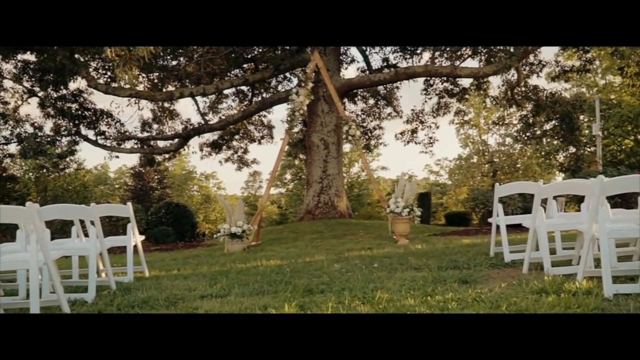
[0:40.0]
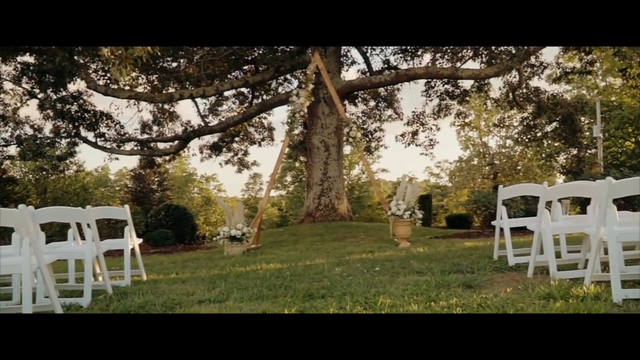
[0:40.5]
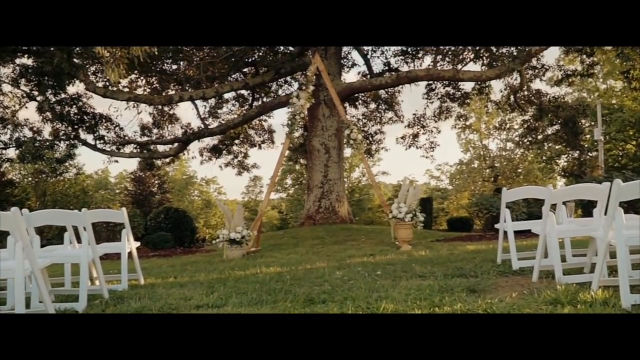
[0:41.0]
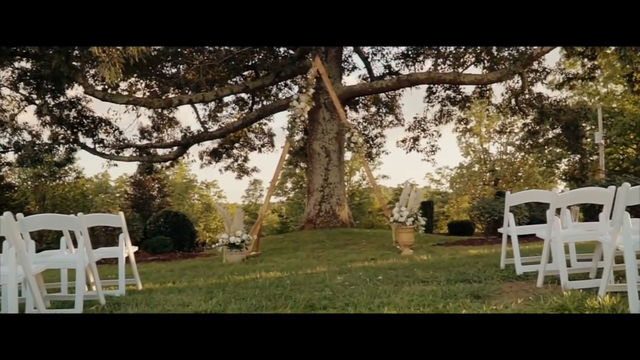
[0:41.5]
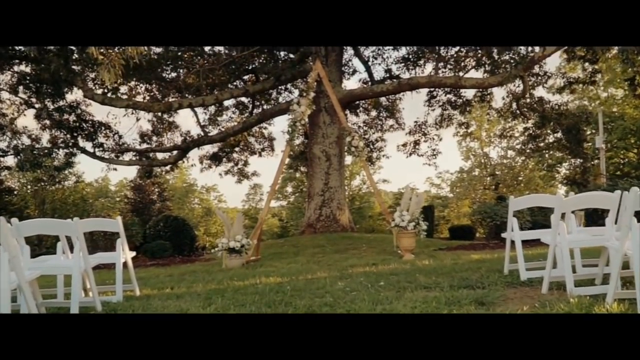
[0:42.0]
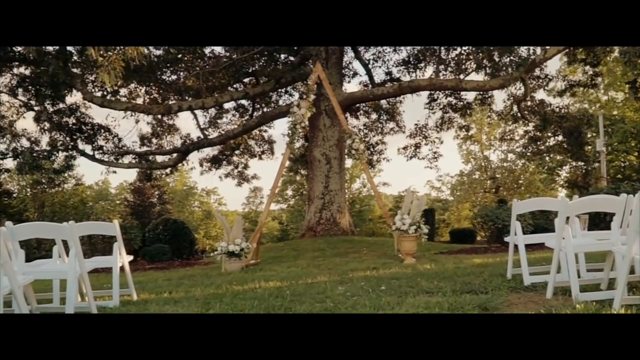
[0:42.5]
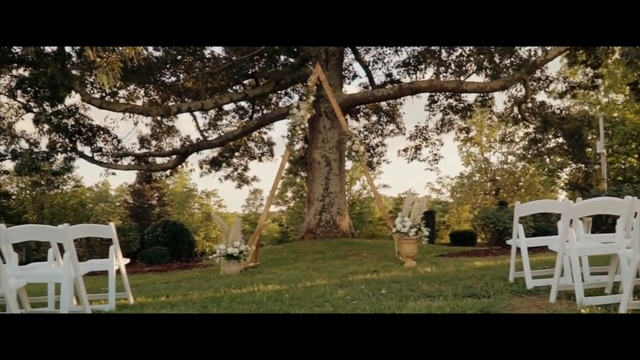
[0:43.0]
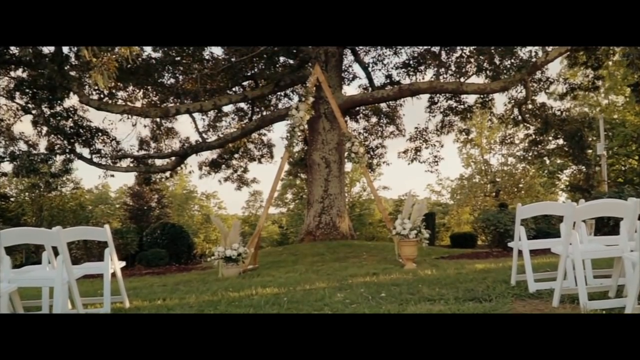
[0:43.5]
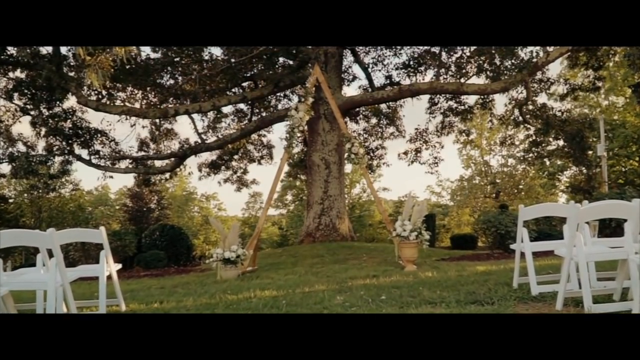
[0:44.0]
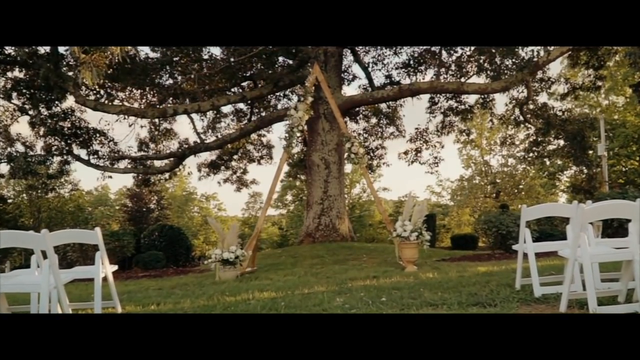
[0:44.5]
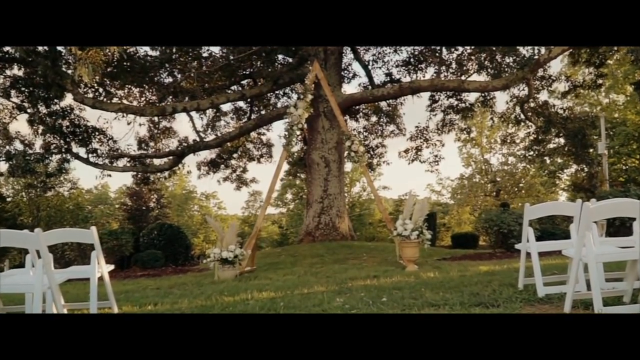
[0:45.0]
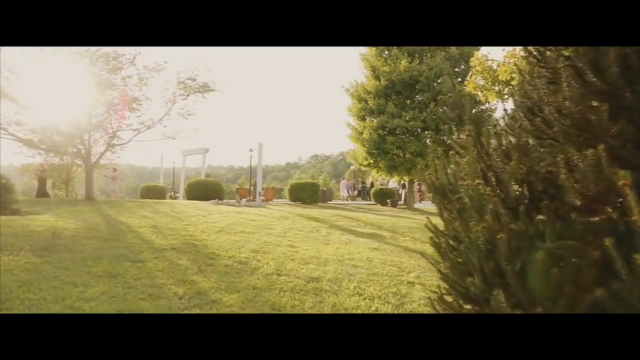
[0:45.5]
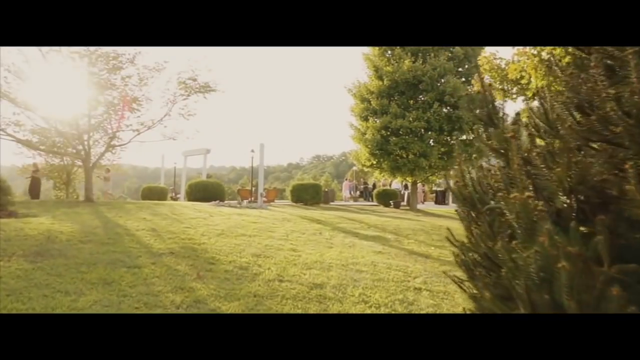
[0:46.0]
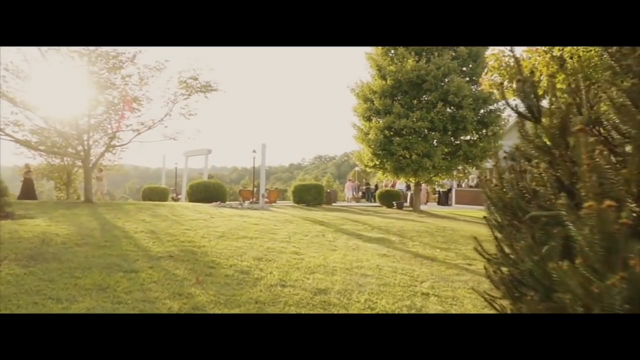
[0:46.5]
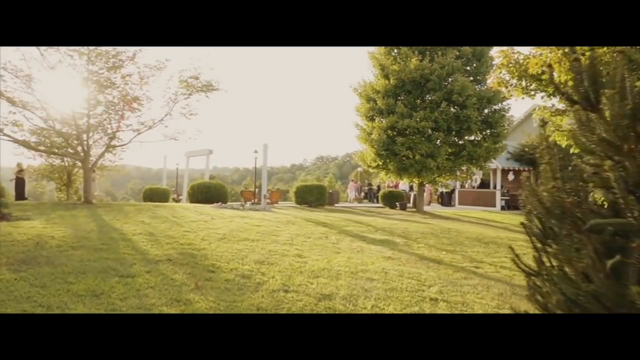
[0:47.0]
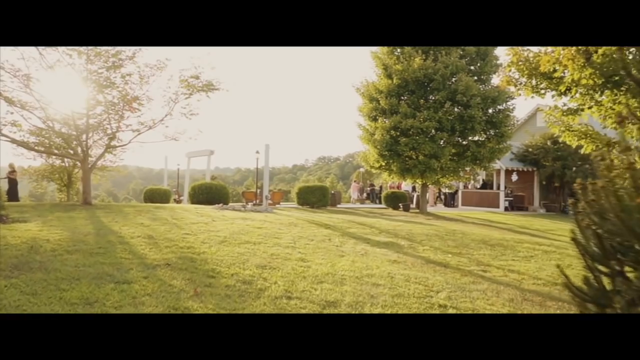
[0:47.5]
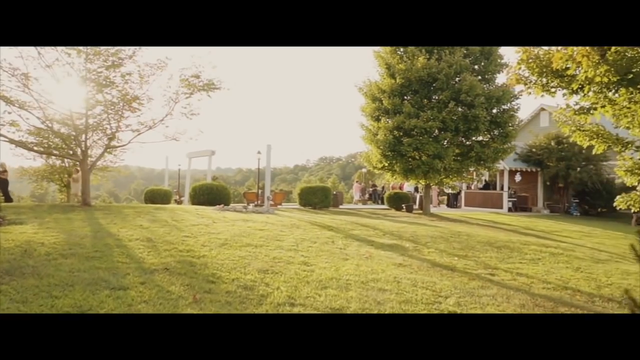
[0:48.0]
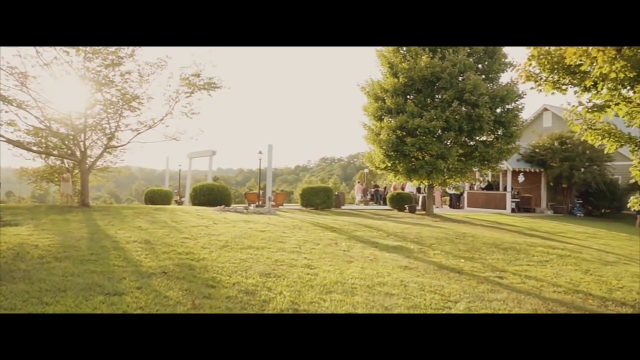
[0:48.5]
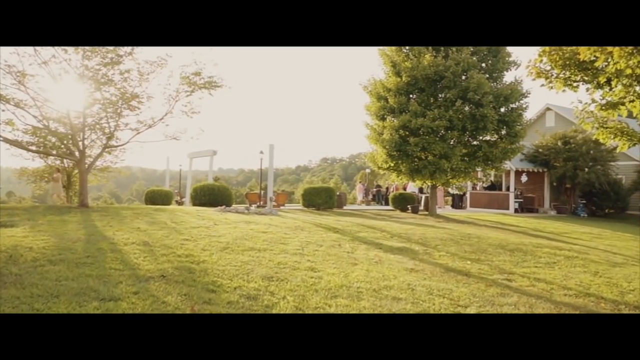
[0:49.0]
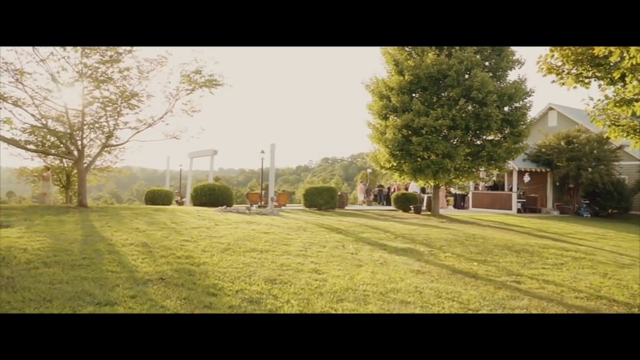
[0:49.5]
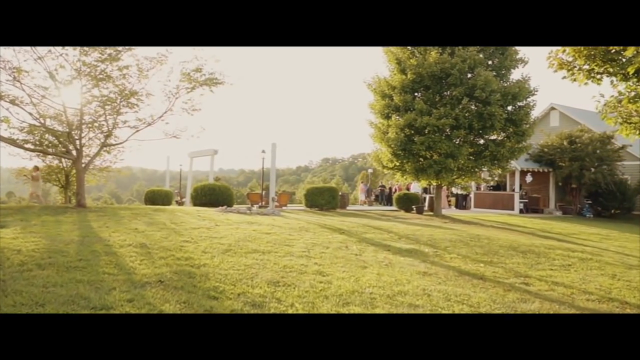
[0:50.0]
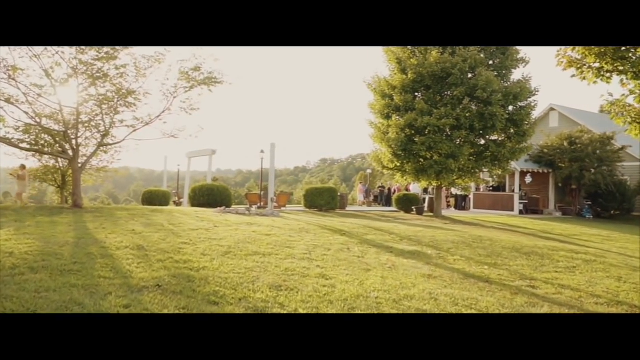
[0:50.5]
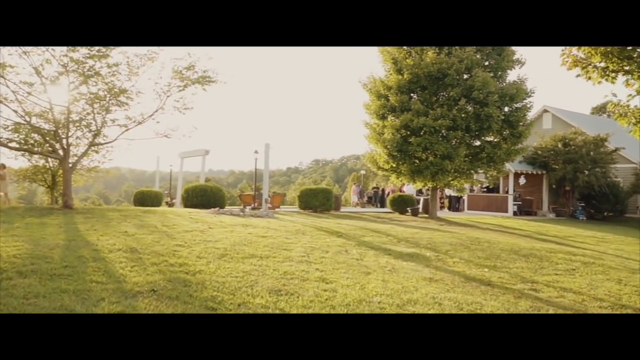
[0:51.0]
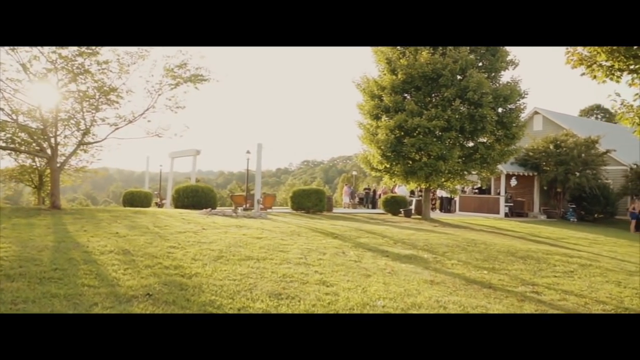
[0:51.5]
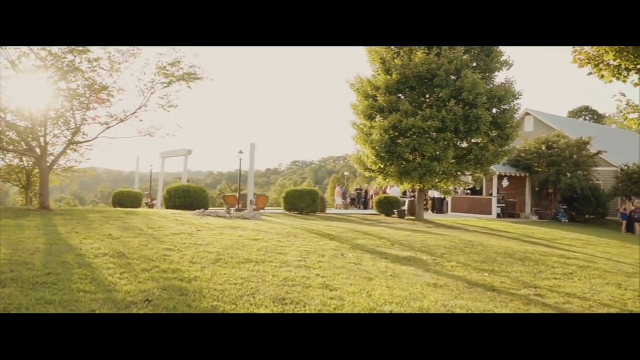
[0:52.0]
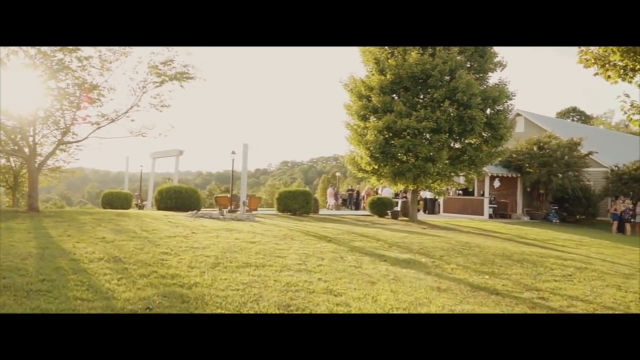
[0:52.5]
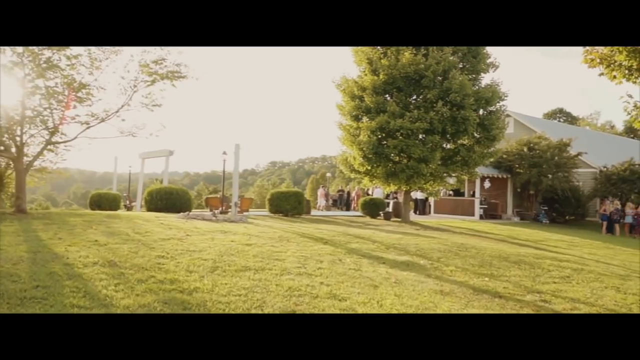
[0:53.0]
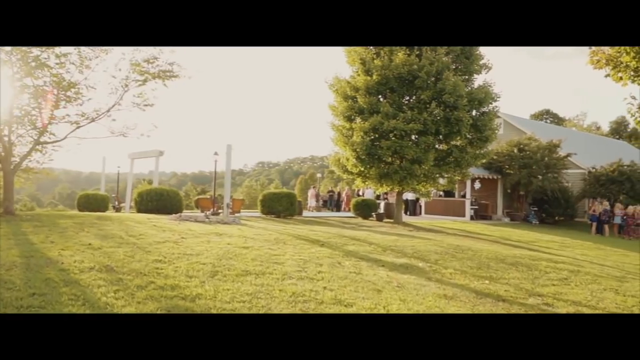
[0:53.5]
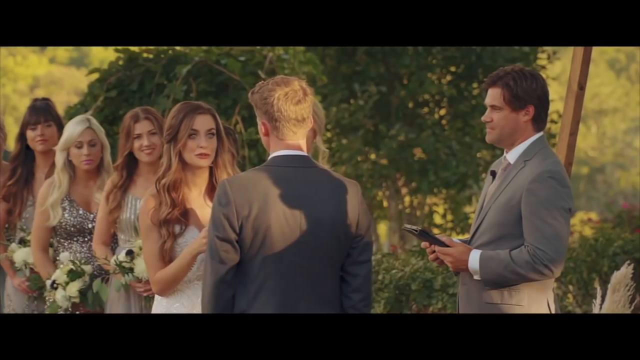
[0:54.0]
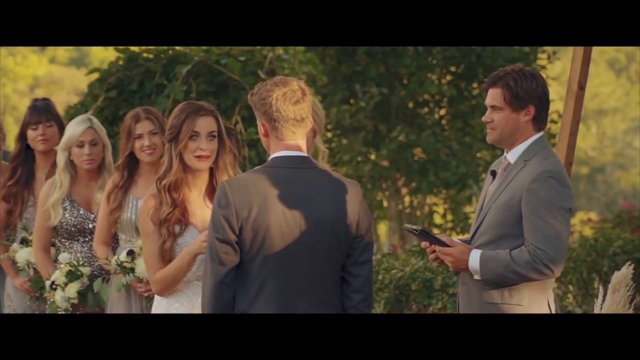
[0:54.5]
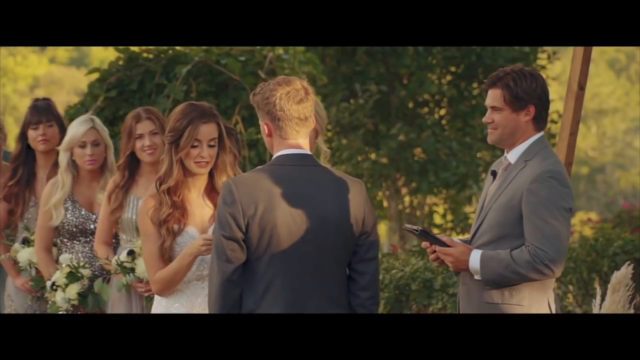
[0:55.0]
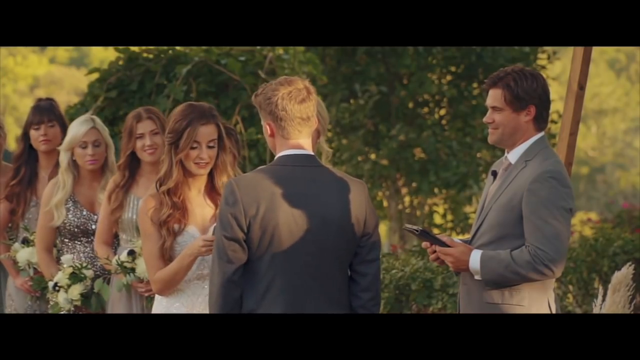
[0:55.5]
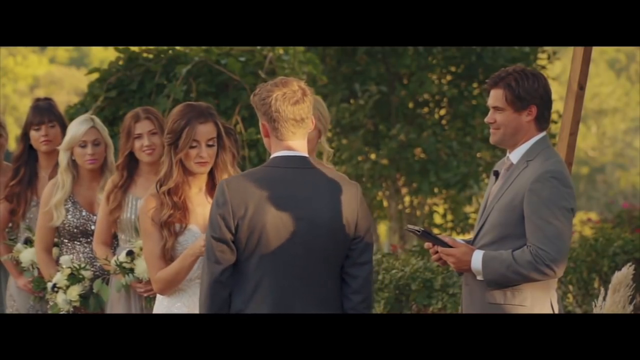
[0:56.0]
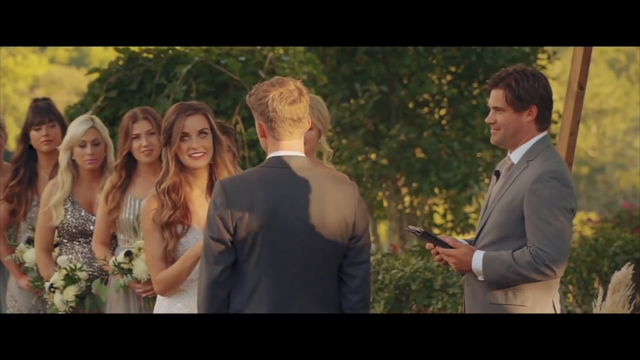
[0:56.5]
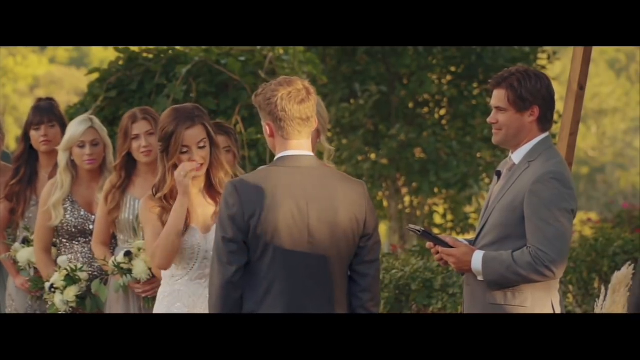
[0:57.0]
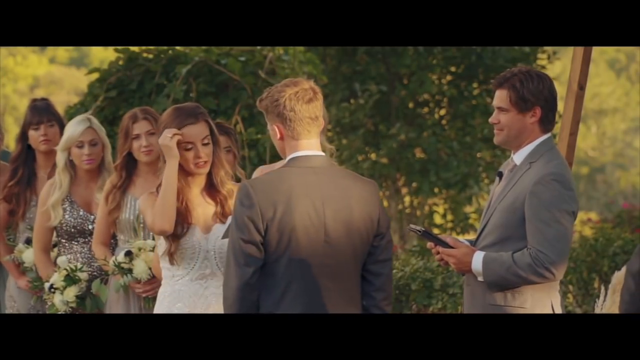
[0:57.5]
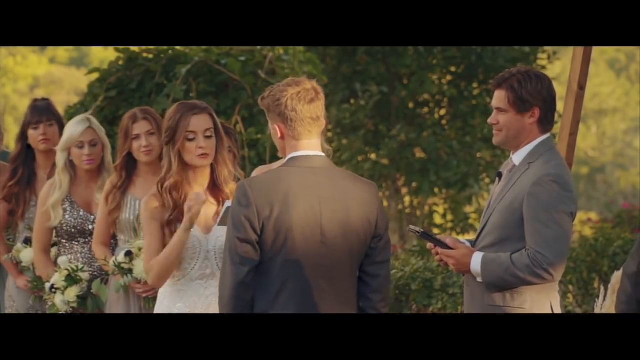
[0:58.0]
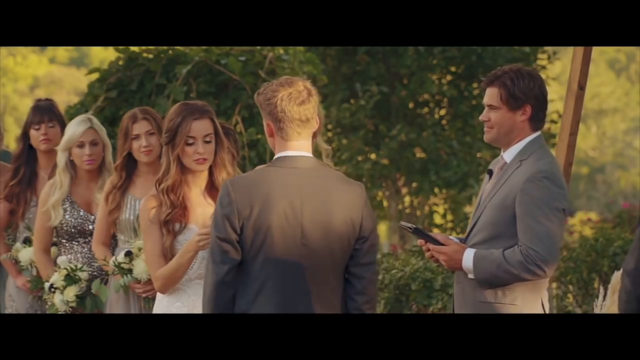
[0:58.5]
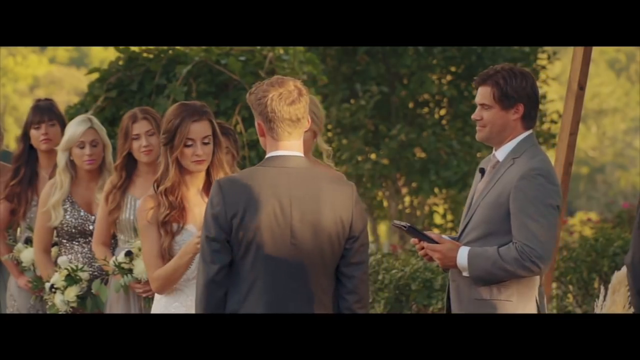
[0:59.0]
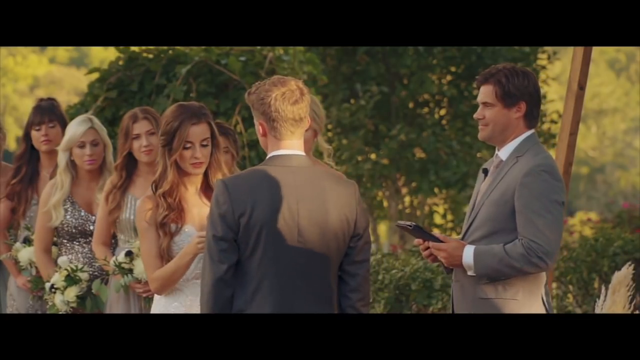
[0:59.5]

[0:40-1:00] The altar is shown, with a huge tree in the background that has three huge branches. The middle of the altar appears to be made of wood. The camera moves towards the altar. Another view of the venue shows the green grass as the sun hits the ground, with the sun coming through one of the trees. On the right side is one tree full of leaves. A few decorations, the garden, and two street posts are visible, with a building on the right side. The scene then returns to the woman giving her vows while holding a piece of paper.